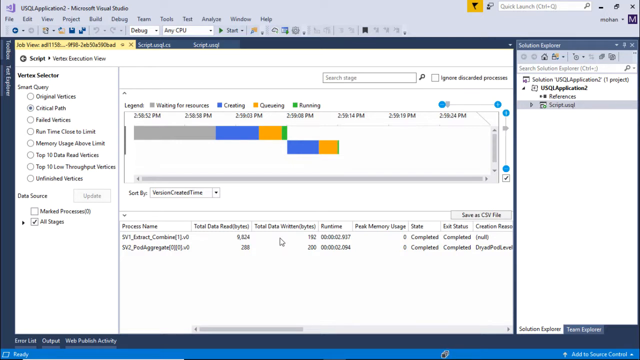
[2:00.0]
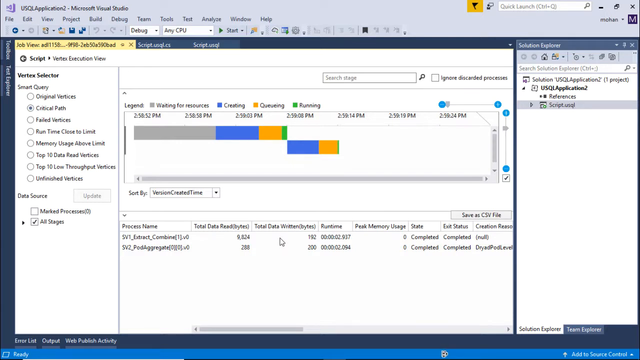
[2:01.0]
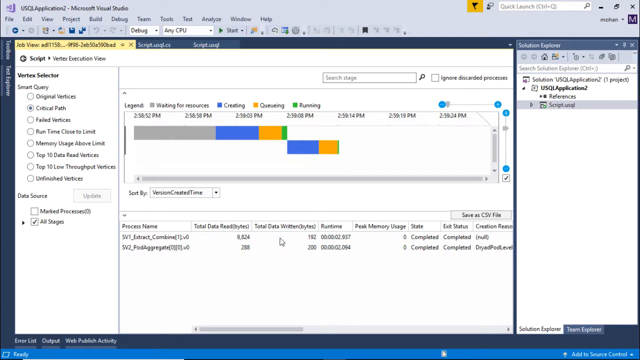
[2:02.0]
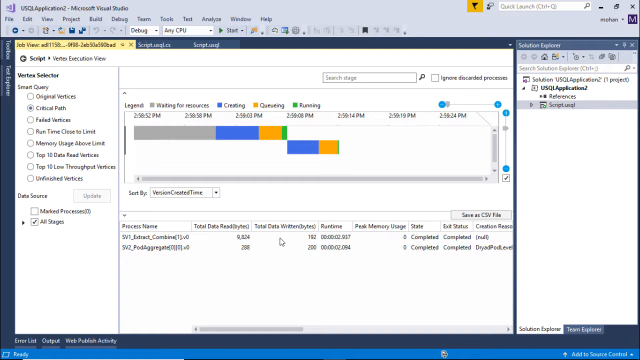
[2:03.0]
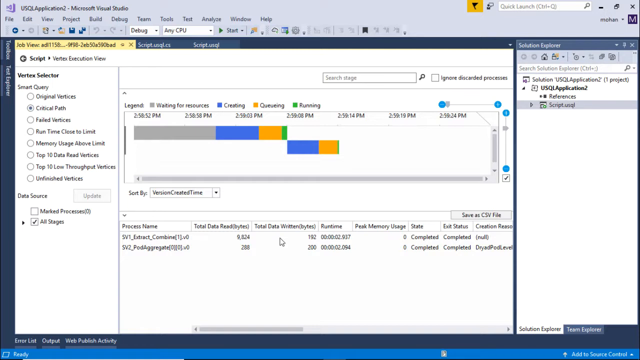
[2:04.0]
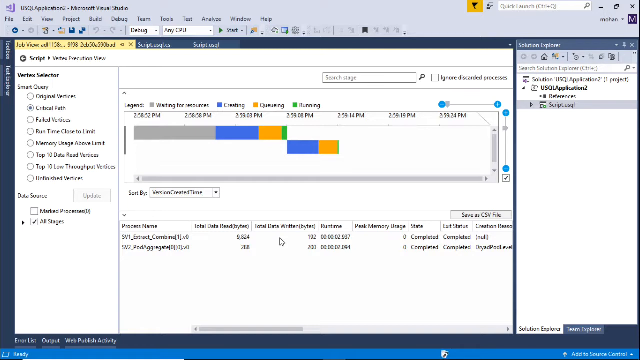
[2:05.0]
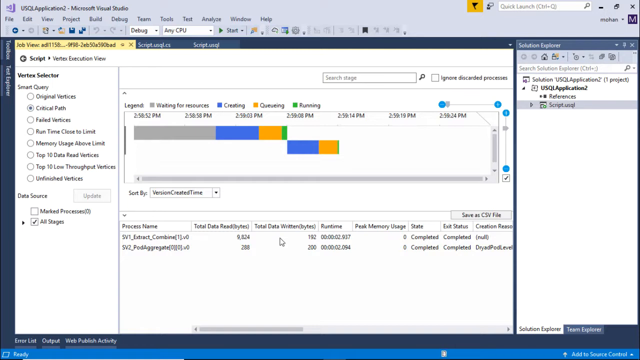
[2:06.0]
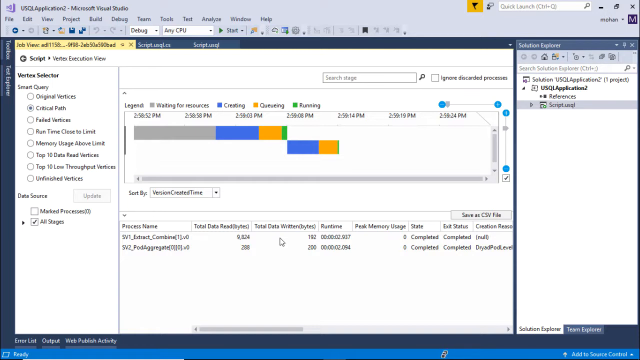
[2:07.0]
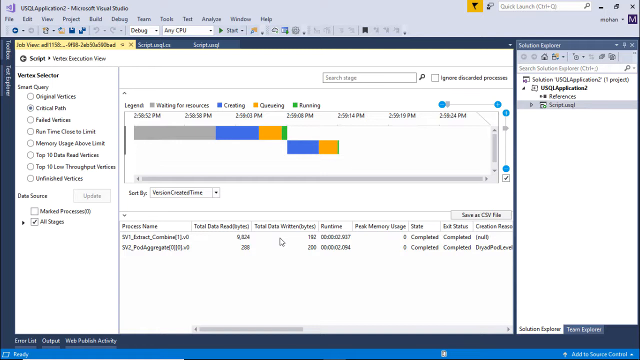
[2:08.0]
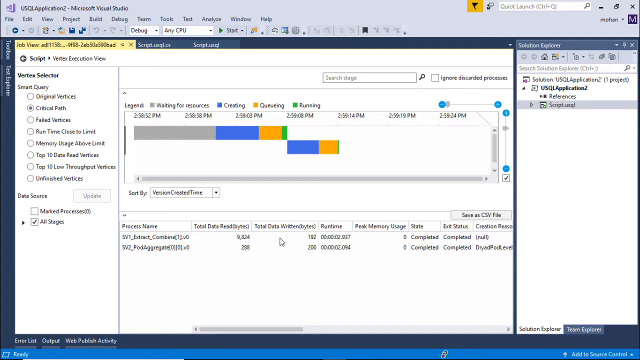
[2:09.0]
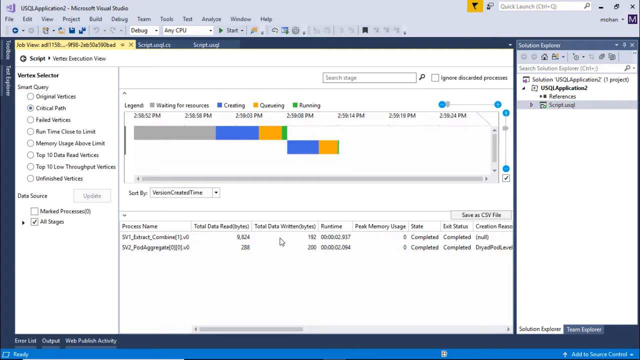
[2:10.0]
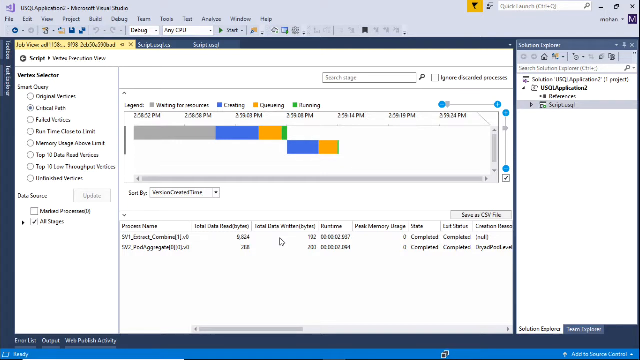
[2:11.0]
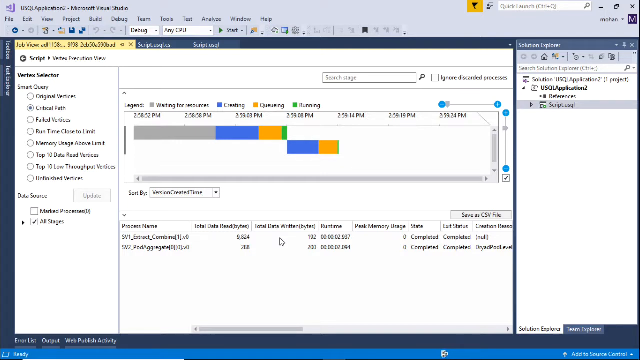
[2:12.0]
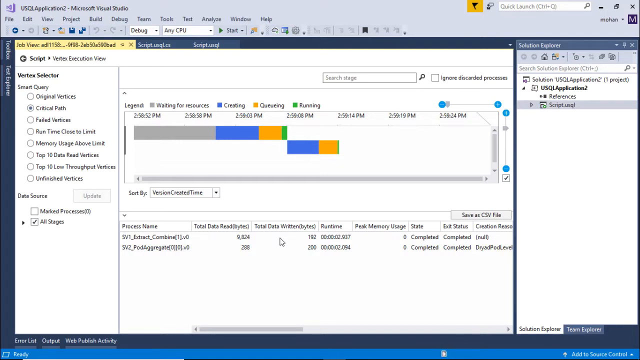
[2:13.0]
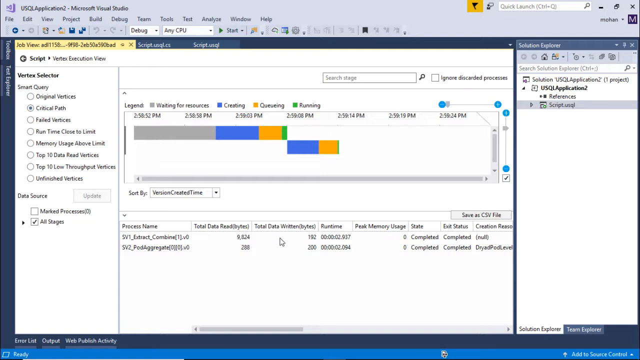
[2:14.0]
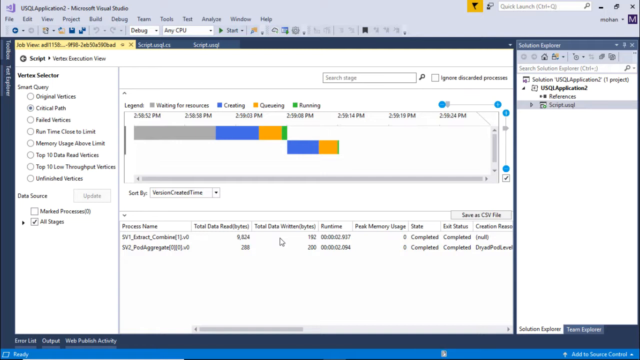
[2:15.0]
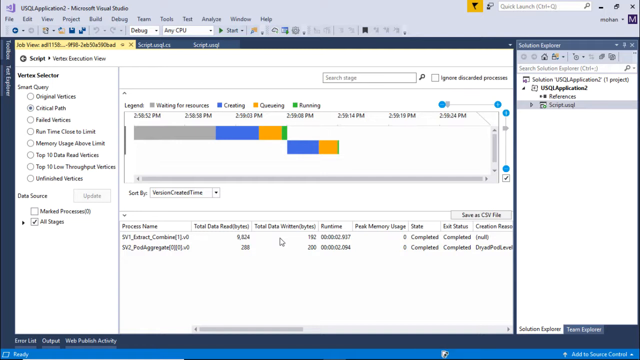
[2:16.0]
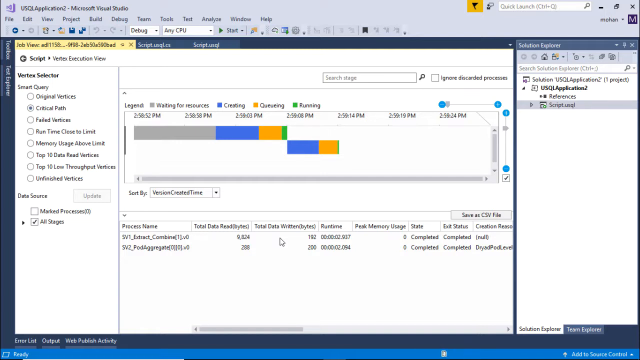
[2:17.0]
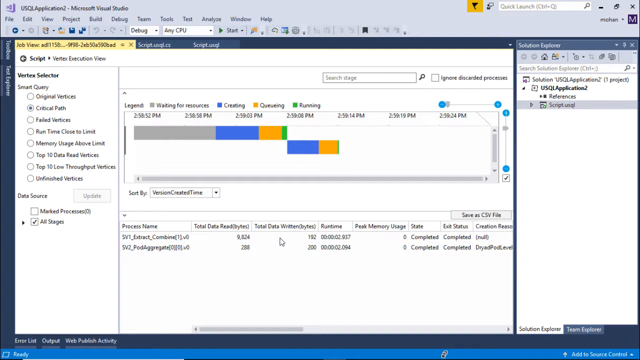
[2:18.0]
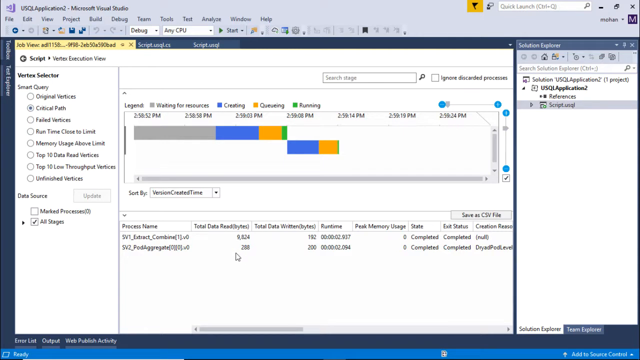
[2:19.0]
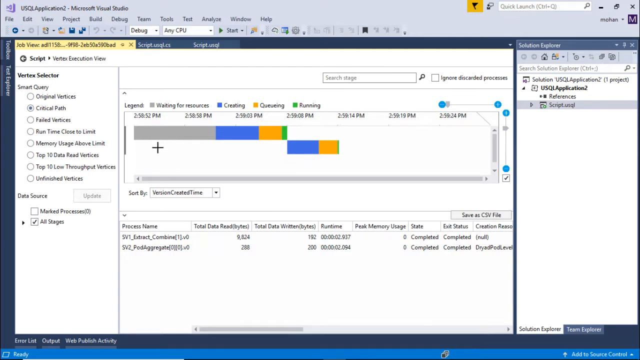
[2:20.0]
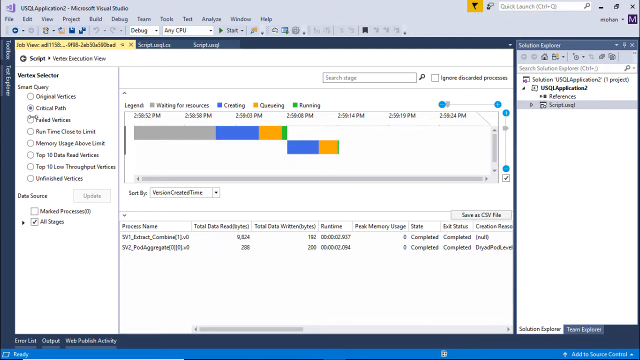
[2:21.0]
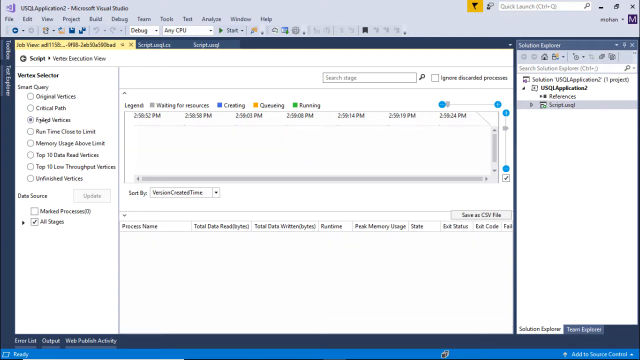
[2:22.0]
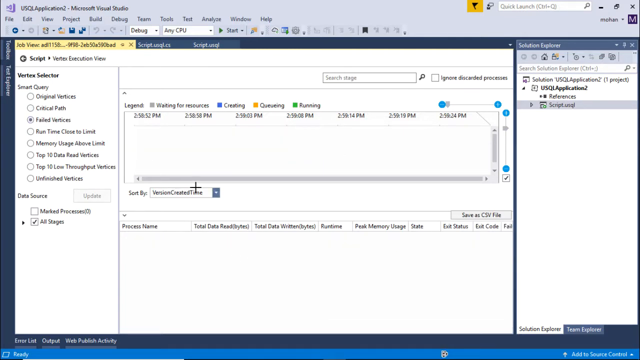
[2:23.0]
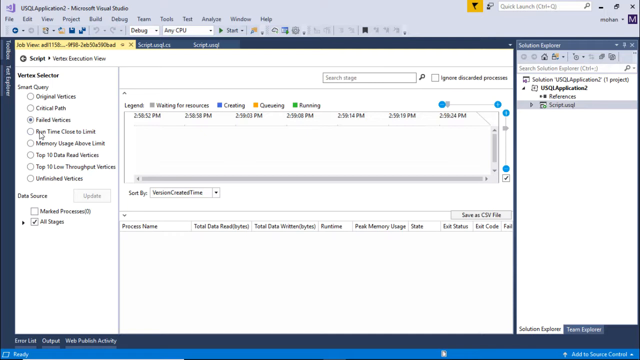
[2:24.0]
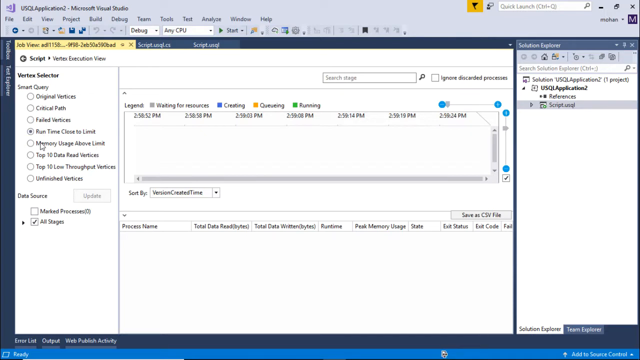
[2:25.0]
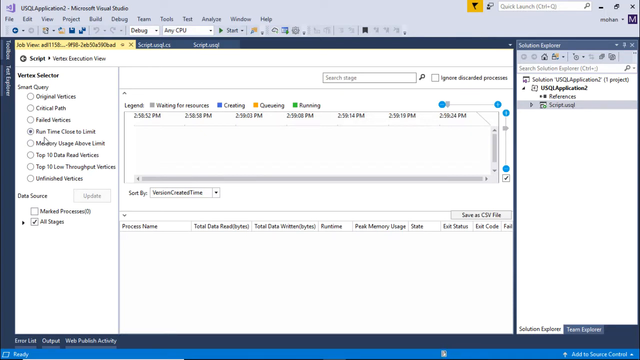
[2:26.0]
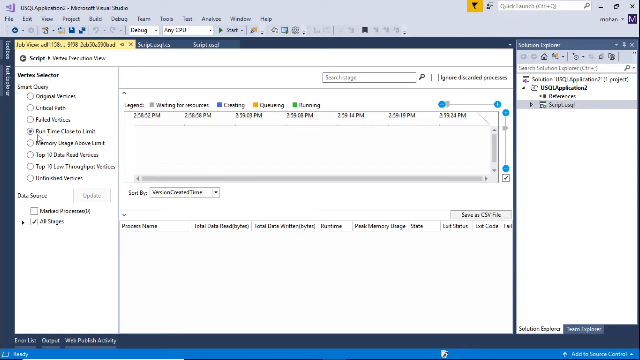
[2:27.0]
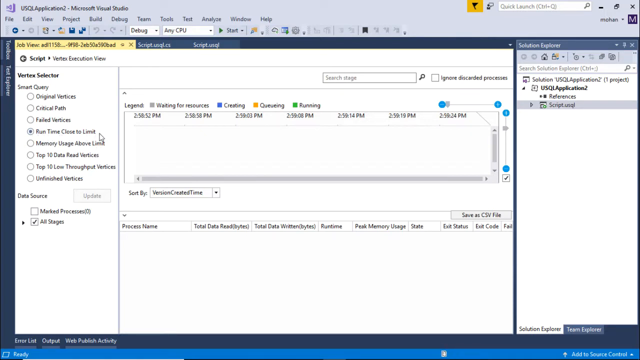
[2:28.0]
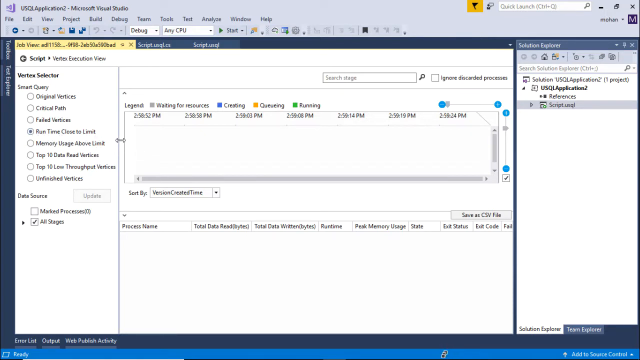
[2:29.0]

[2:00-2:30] The chart in the center of the screen has changed slightly, now showing more gray than blue, gold and green for the first aspect of the graph. The mouse remains still at first, then moves over to the left-hand side to select a new bubble; the screen changes slightly and the graph is removed. The mouse then selects another bubble and the graph returns. The border across the top of the screenshot shows a file, edit, view type of layout, and the text is illegible. The mouse movements are somewhat erratic and waving, as if to bring attention to an area on the screen. Light blue dots, which appear to indicate a measurement of the graph, are to the right of the graph portion of the screen.